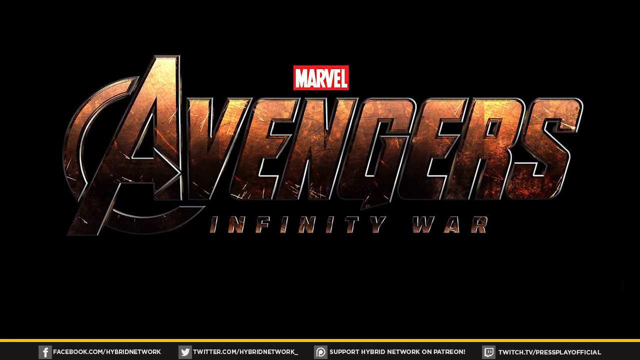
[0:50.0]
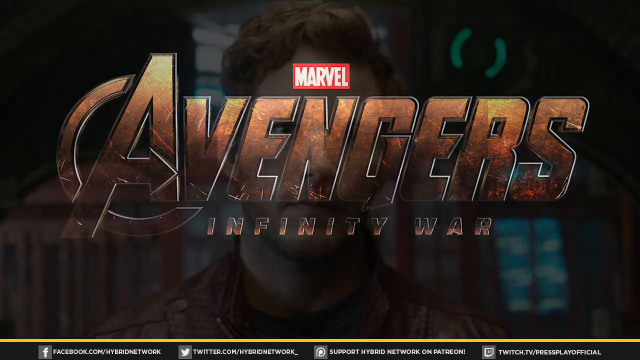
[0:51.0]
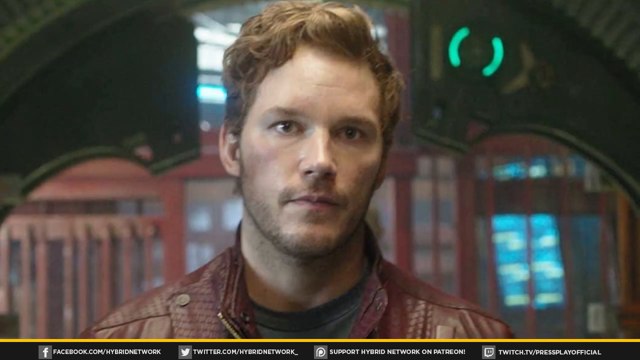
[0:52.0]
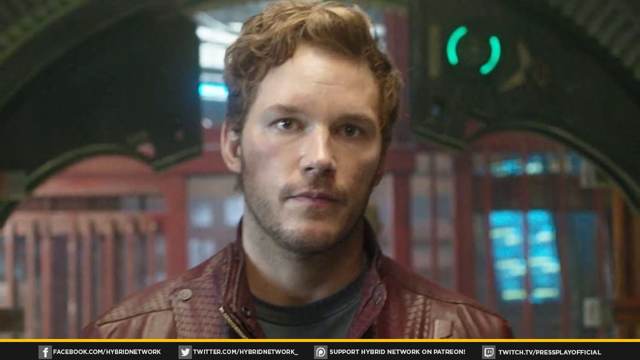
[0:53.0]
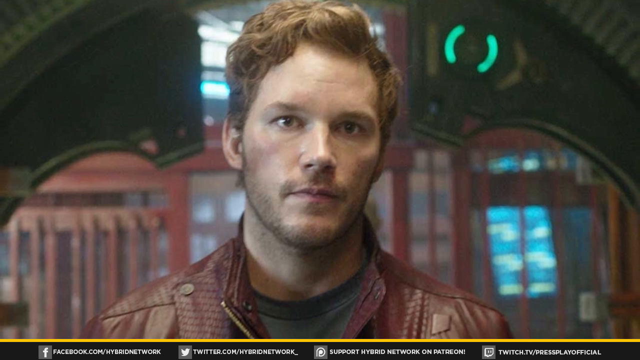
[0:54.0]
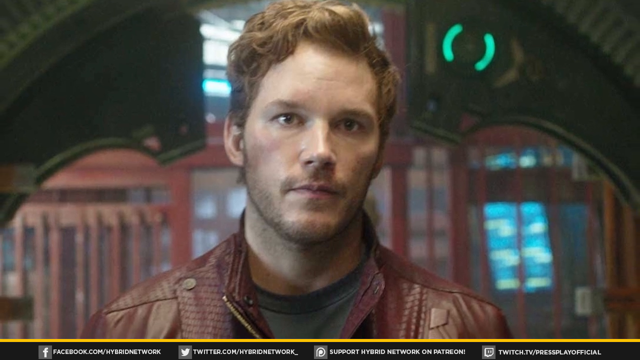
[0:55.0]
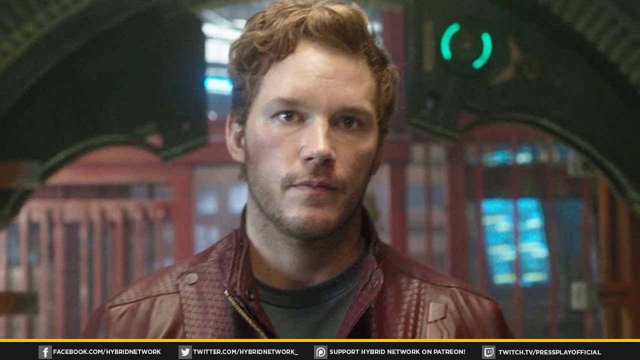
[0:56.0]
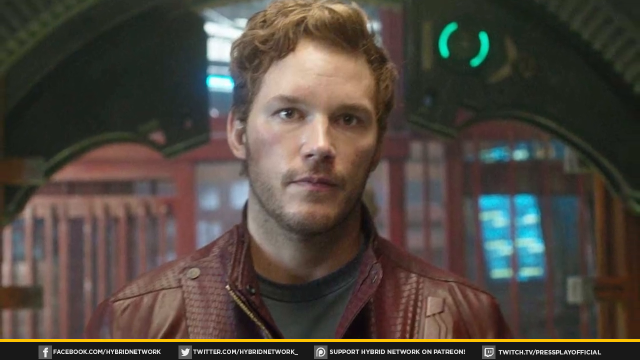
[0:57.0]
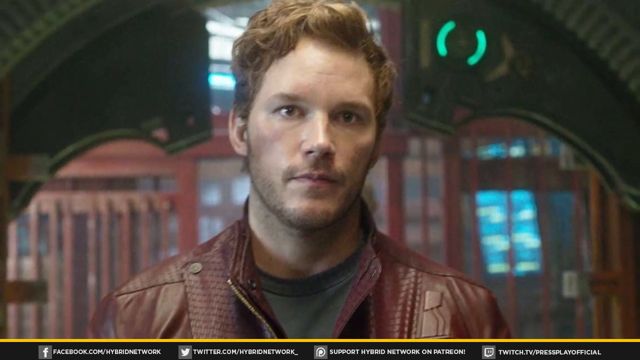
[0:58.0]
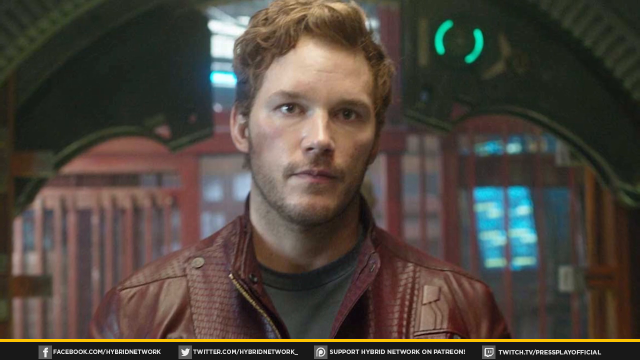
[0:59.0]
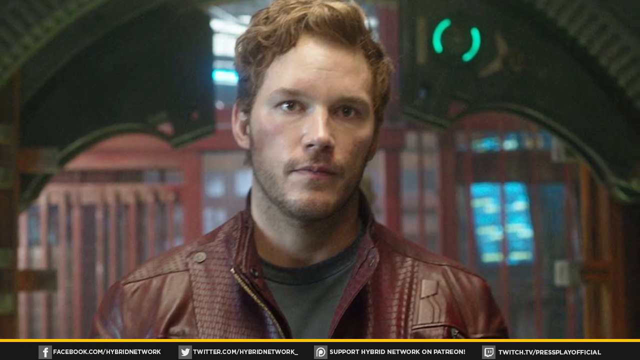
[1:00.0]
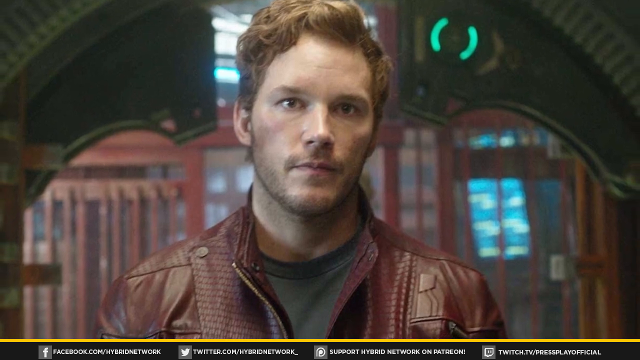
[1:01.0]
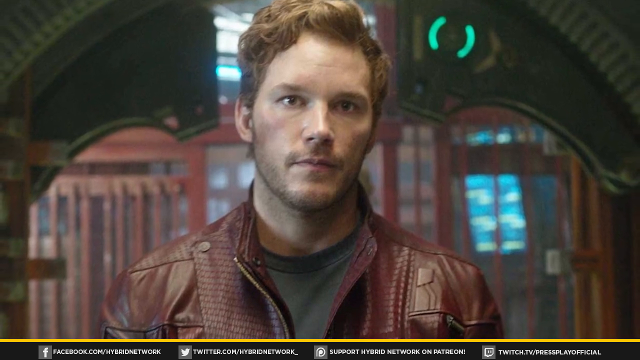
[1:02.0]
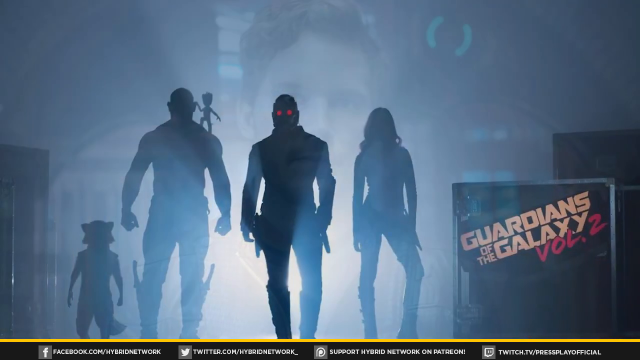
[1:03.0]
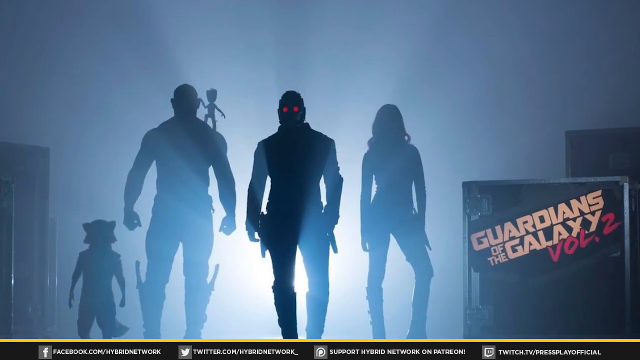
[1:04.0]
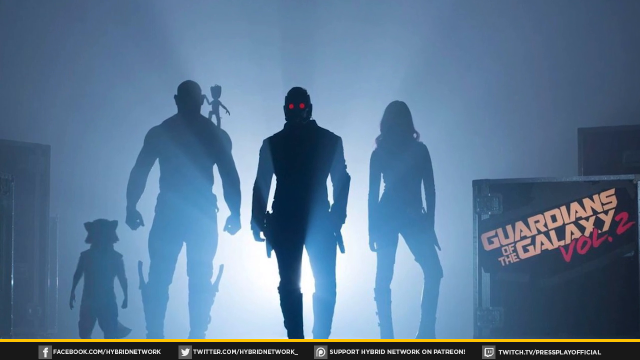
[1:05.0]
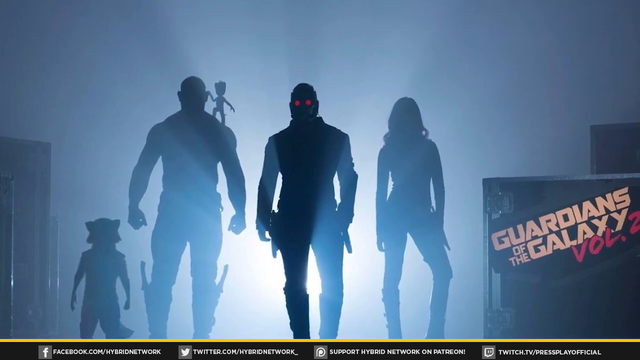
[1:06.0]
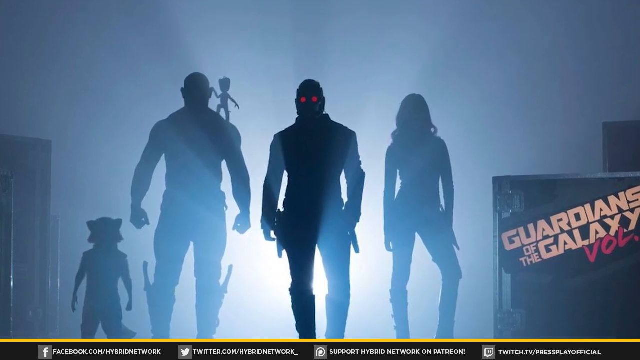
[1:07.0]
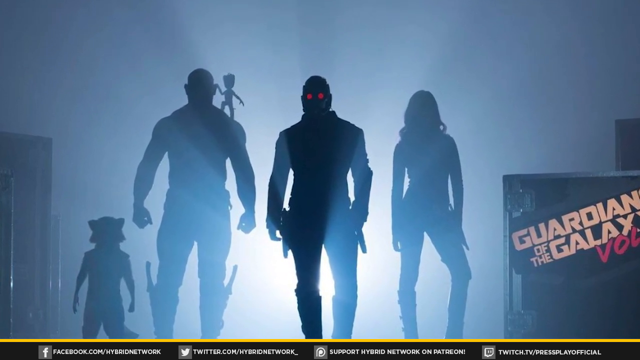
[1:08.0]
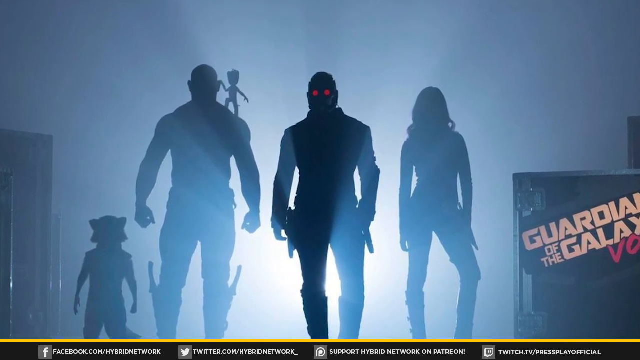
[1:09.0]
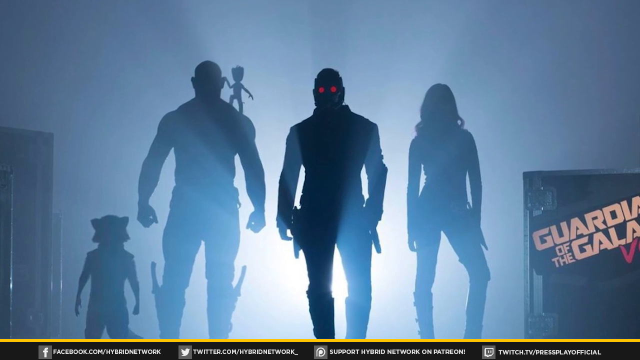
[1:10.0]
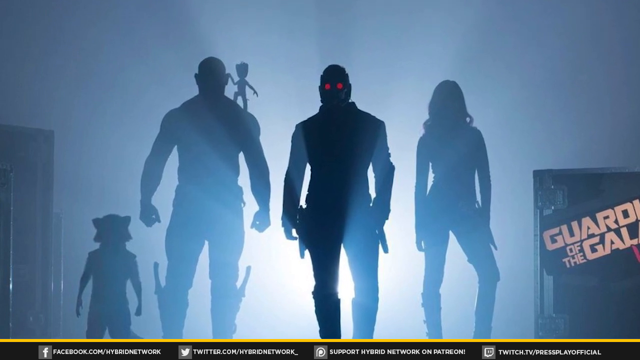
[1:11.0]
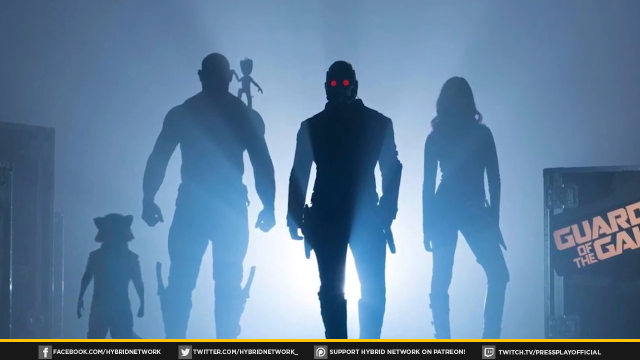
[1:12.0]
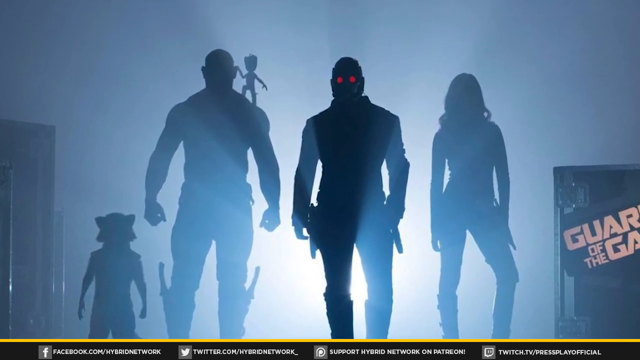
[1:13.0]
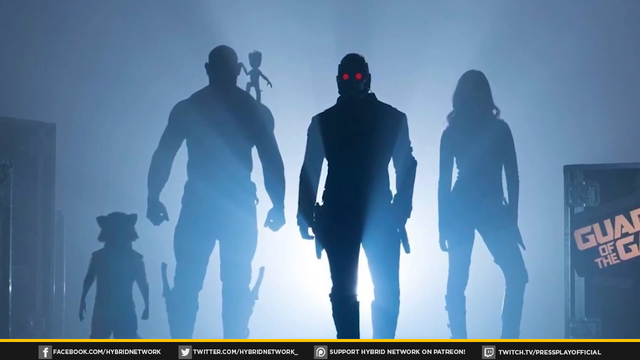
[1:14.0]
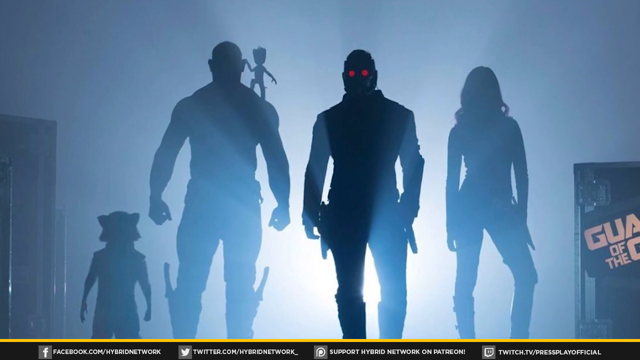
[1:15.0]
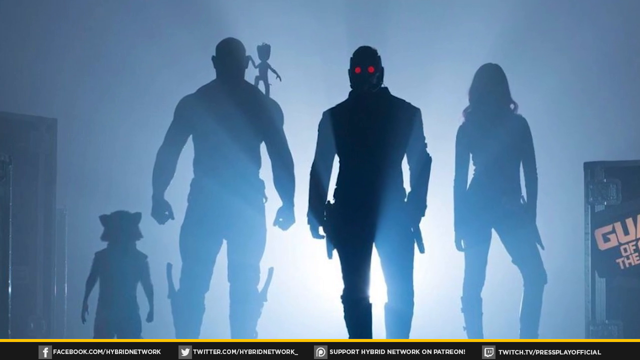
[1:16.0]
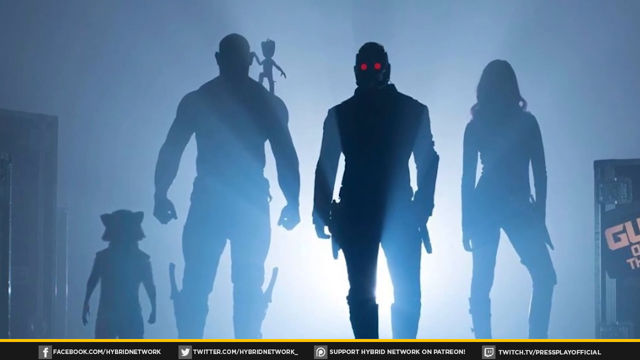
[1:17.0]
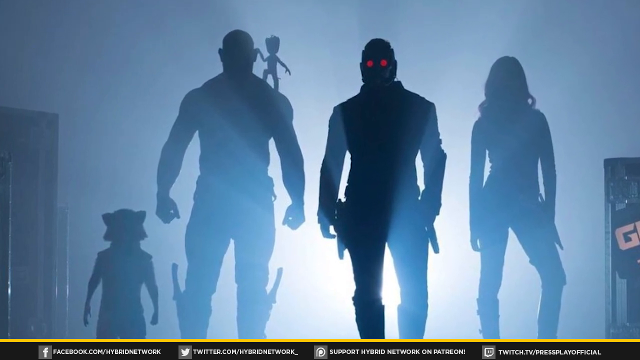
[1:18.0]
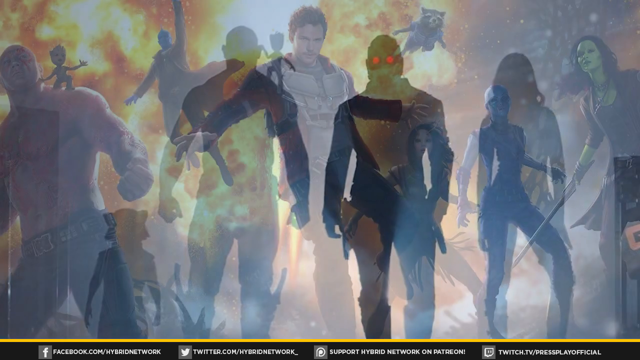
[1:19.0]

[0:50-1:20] The video appears to be about comic books or superhero movies. On a black background in the center of the frame, the word "Marvel" appears in white font on a red background, with "Avengers Infinity War" below it in golden brown font. After a moment, a picture of Chris Pratt in character appears; he wears a reddish jacket, with what looks like a futuristic city behind him. The camera pulls out. A different image shows several characters in darkness, silhouetted by light; they appear to be characters from one of the Guardians of the Galaxy movies. Only their silhouettes are visible, except that the red eyes of one character glow; a female character can be made out by her hair and silhouette, and there is a big muscled one next to the raccoon, along with a little plant character. White lighting behind them illuminates them. They appear to be in a warehouse area with boxes, and toward the right one of the boxes says "Guardians of the Galaxy Volume 2". The camera pushes in steadily toward the raccoon character. Next comes an image of the characters with fiery orange explosions behind them, showing a variety of characters from the Guardians of the Galaxy universe, and then a massive explosion in the background.